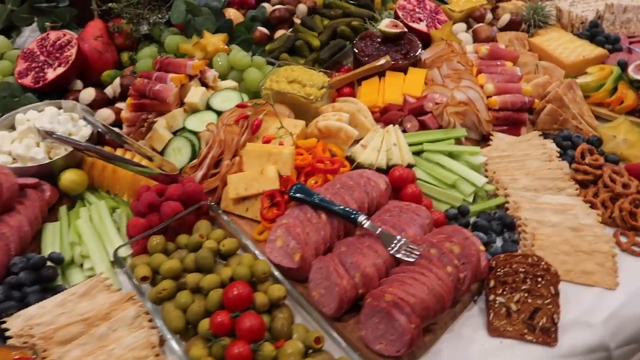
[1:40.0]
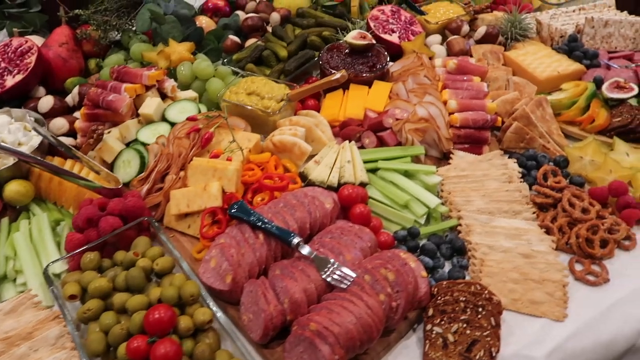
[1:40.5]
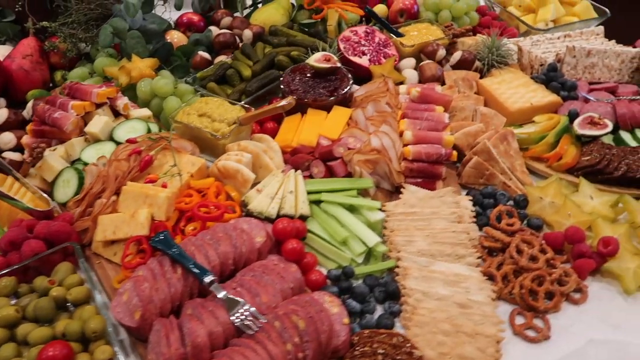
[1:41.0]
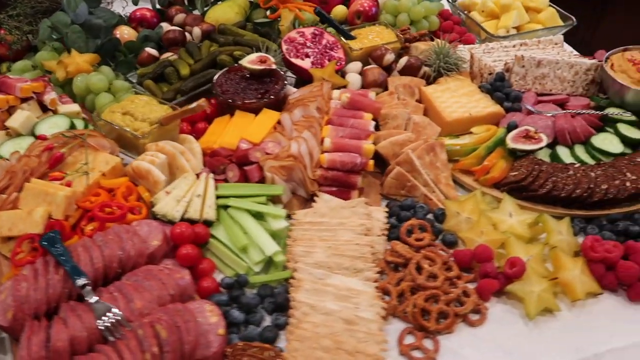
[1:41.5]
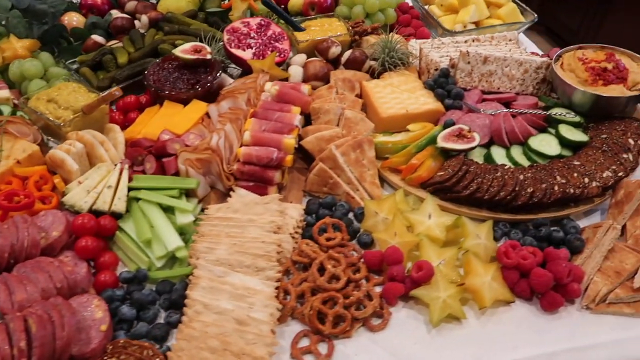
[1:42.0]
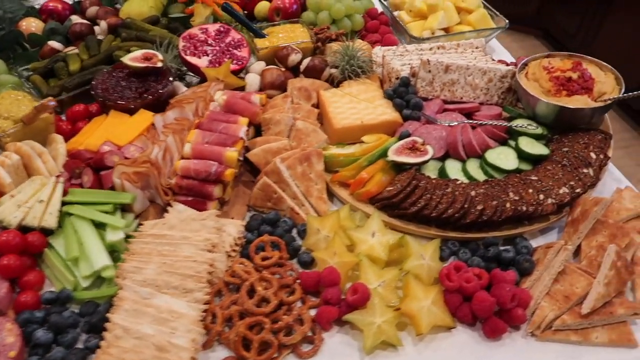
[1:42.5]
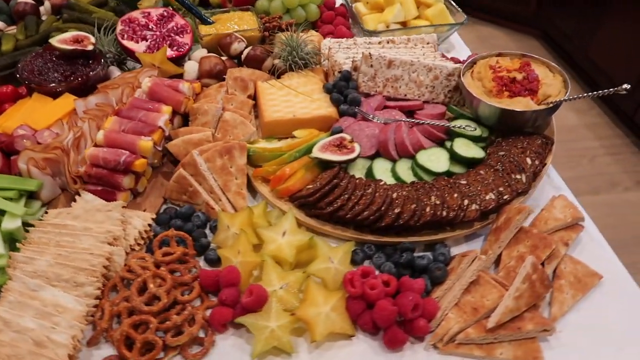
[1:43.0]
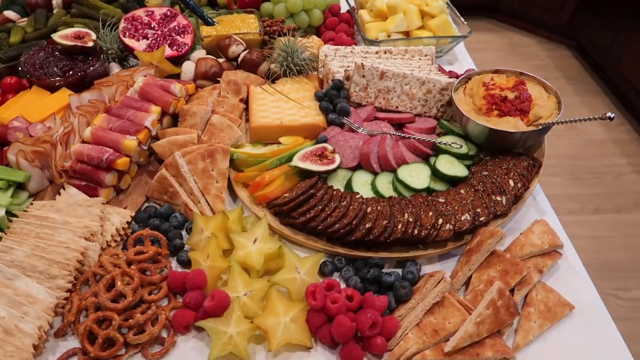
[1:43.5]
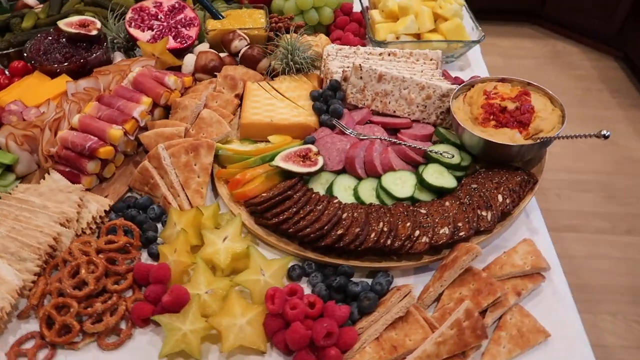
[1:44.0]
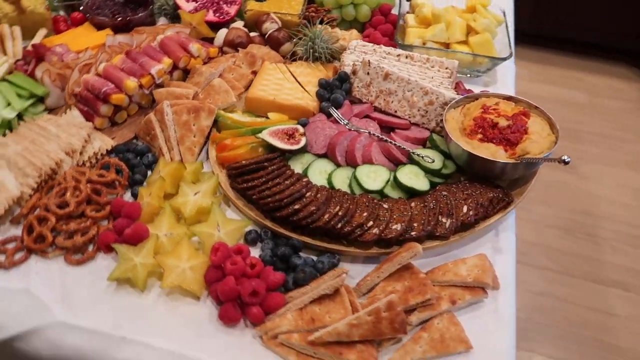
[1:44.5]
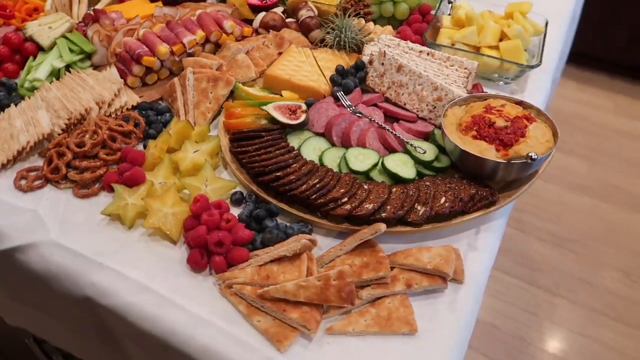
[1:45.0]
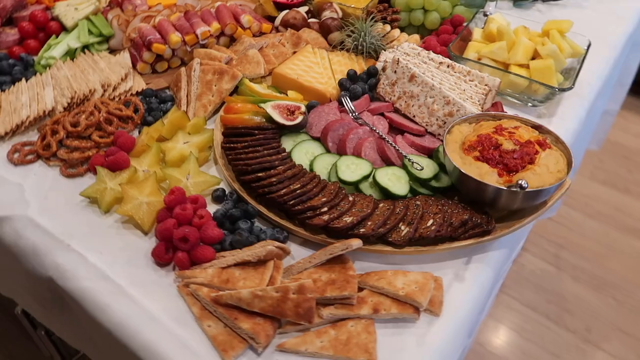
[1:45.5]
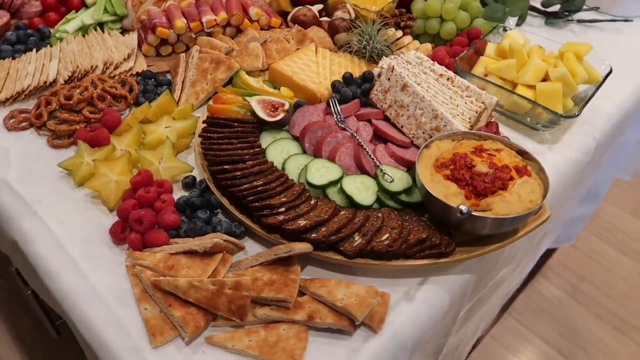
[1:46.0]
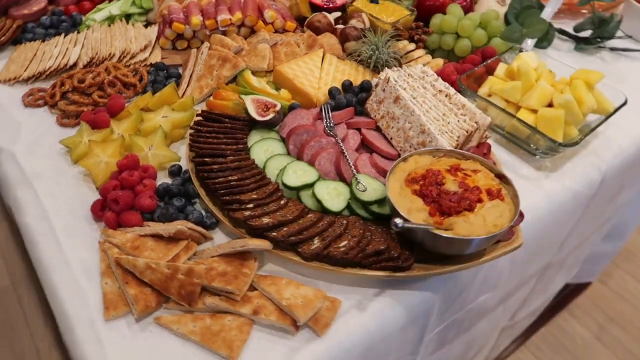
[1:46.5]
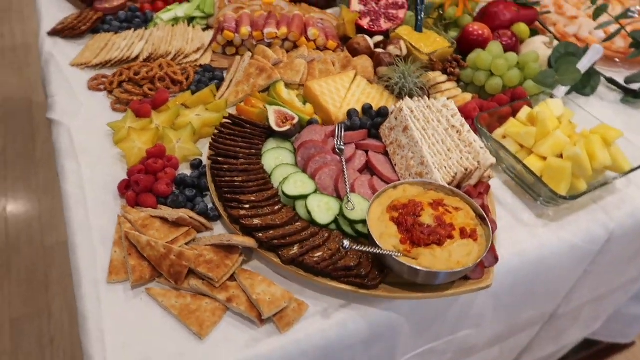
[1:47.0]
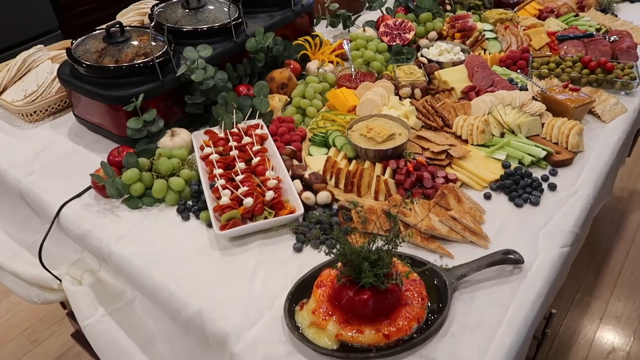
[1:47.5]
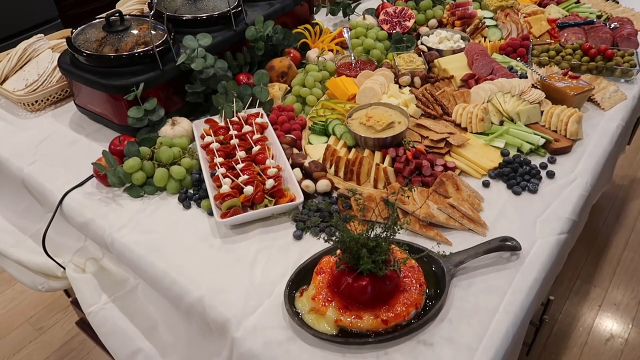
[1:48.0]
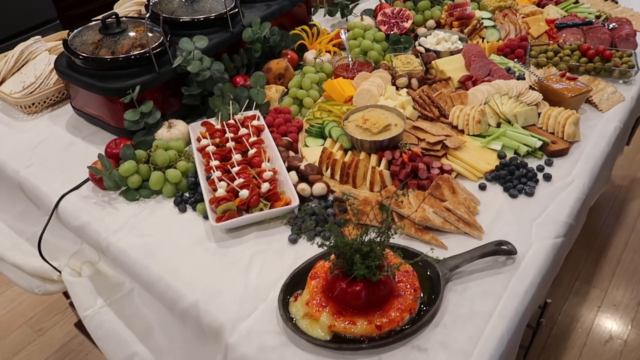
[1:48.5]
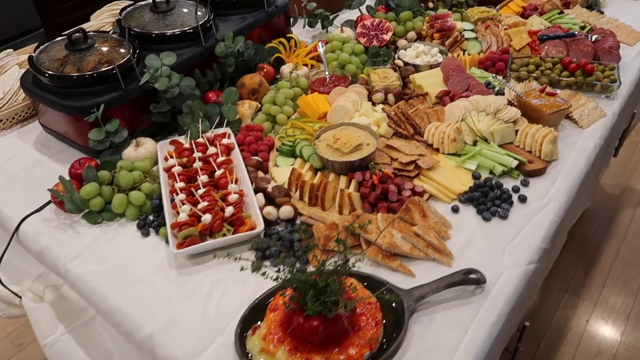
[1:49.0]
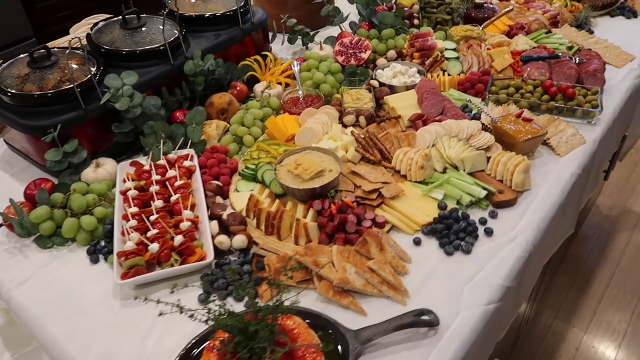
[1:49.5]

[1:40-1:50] A wide-angle image shows various food items on the table: more celery sticks, stainless steel pinchers used to grab food, cheddar cheese, a sliced pomegranate, star-shaped pineapples, green grapes, and neatly arranged sliced cucumbers. There are additional pineapples. A stainless steel bowl of cream sauce has a spoon stuck into it. There are neatly sliced red salamis, olives, tomatoes, other vegetables, and dips on the table.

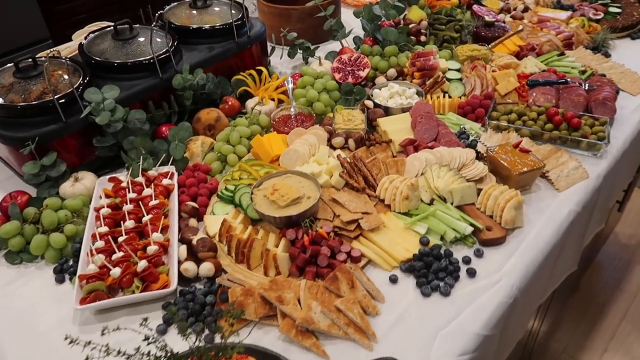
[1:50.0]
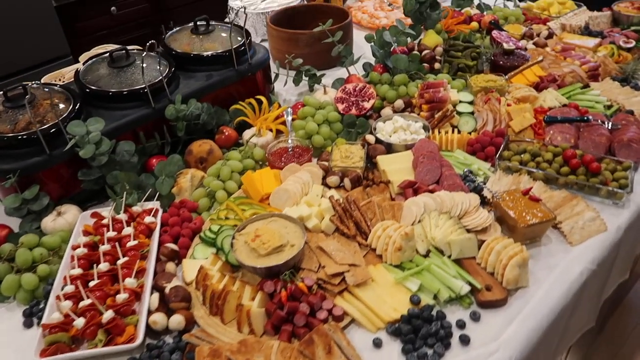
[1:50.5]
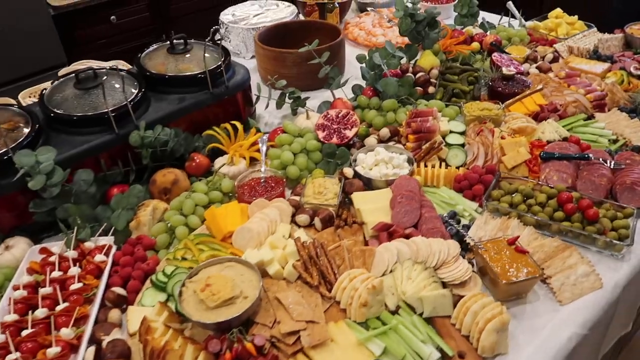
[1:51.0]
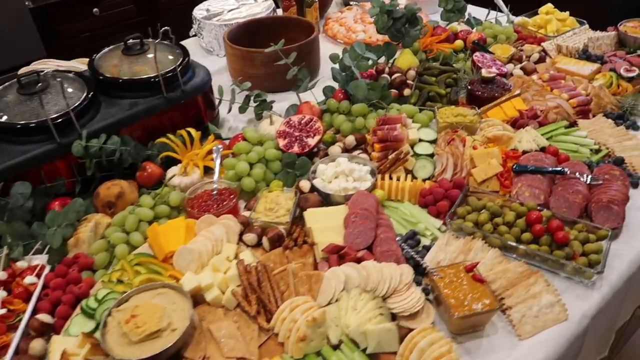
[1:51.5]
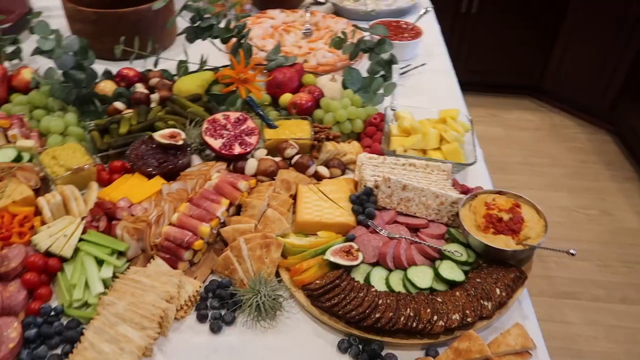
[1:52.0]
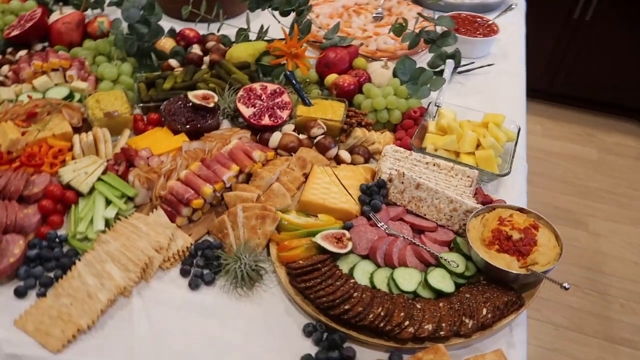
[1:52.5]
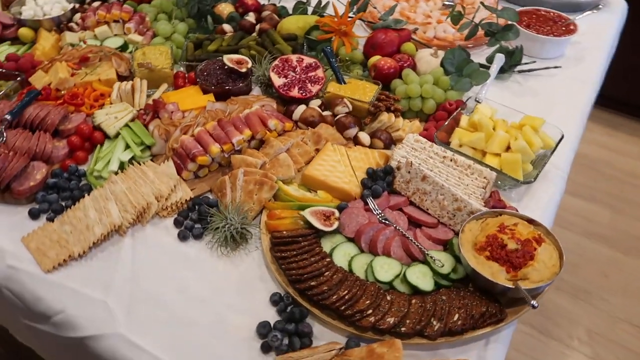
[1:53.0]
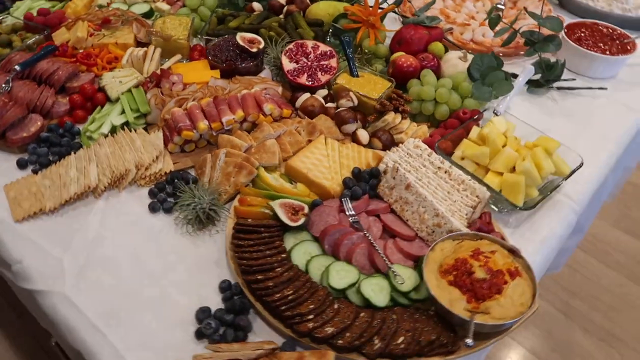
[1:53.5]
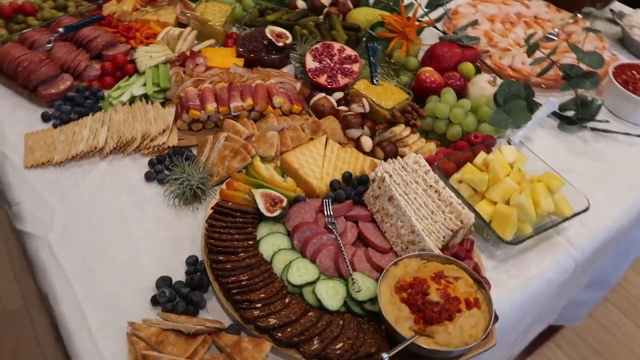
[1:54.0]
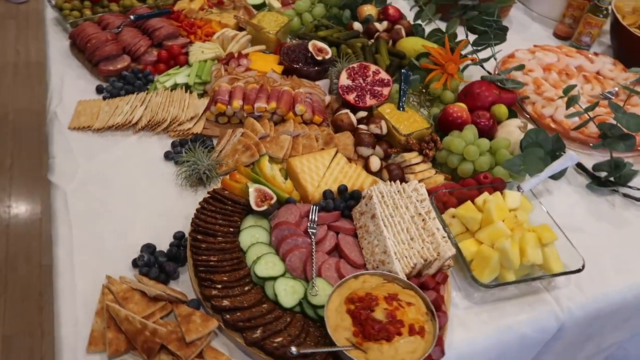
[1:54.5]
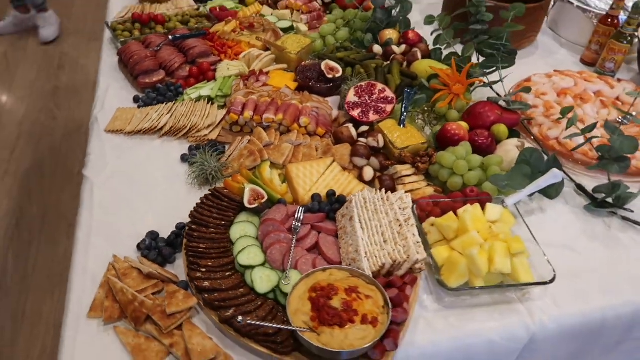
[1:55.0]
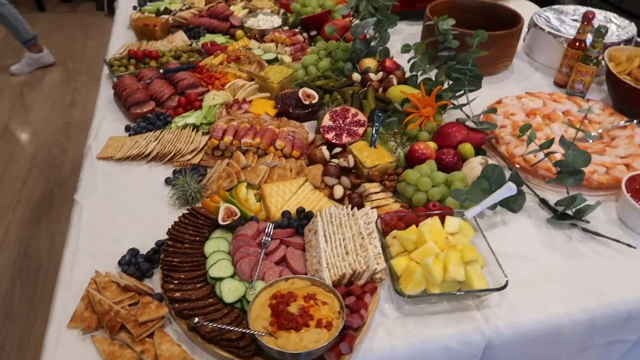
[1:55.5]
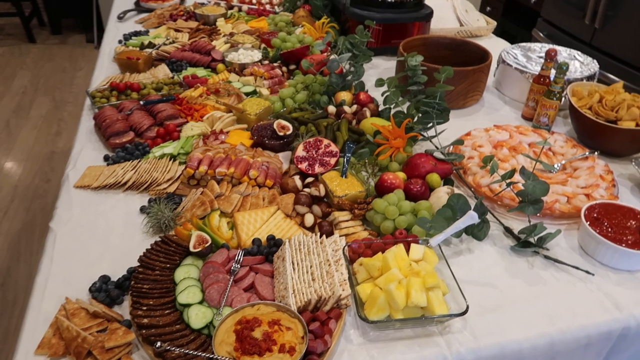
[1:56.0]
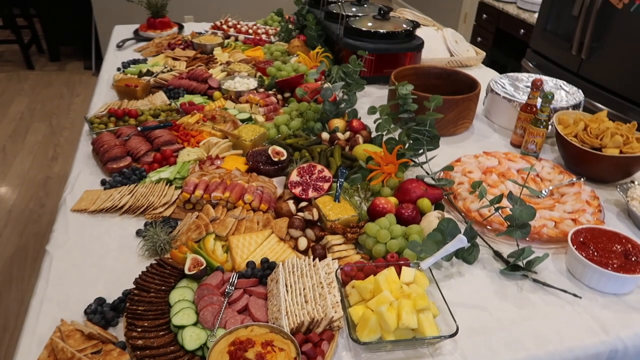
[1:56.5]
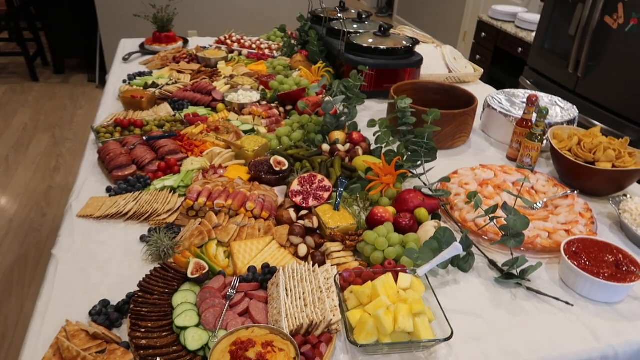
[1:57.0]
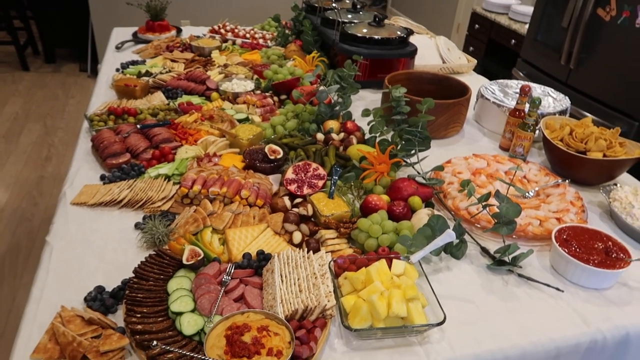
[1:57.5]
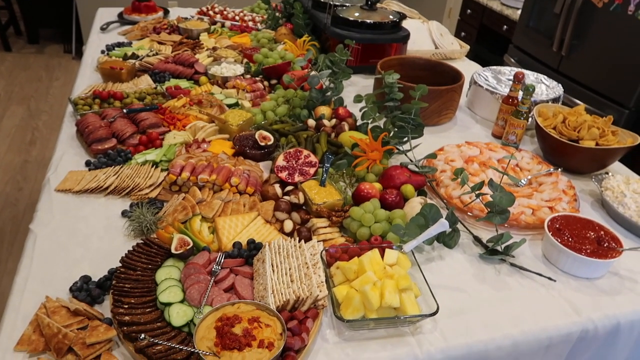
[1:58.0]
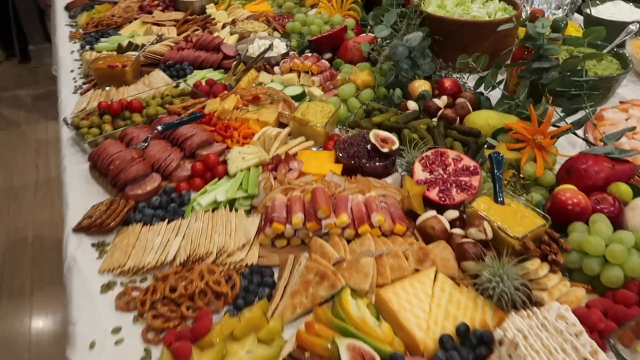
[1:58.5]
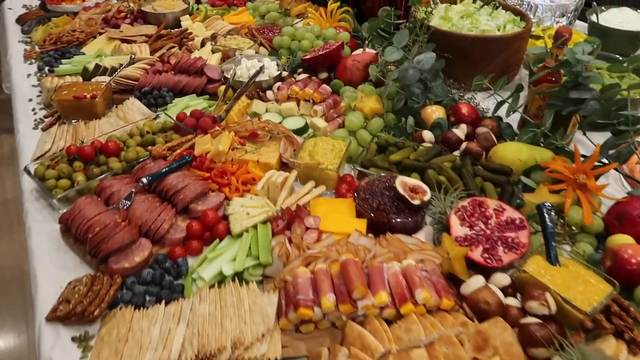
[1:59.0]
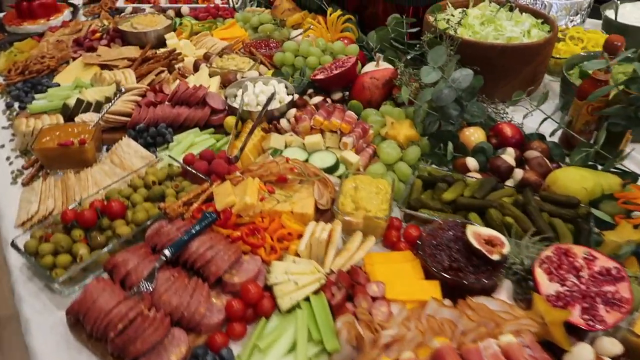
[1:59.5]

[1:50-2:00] An overview shows various food arranged on a charcuterie board as the camera pans around the table. A leg wearing a white sneaker walks by, and the floor is light brown. There are about three casserole pots with lids; they have black handles, stainless lid edges and black exteriors, and they are all placed on a stand with a black slab. Next to the casserole pots is a red bowl. On the table there are also cloves of garlic, green leafy vegetables and sliced bread.